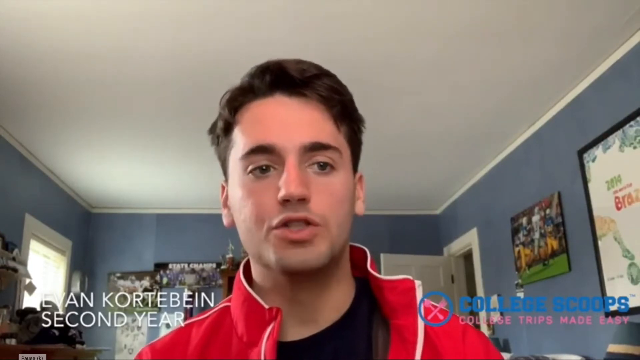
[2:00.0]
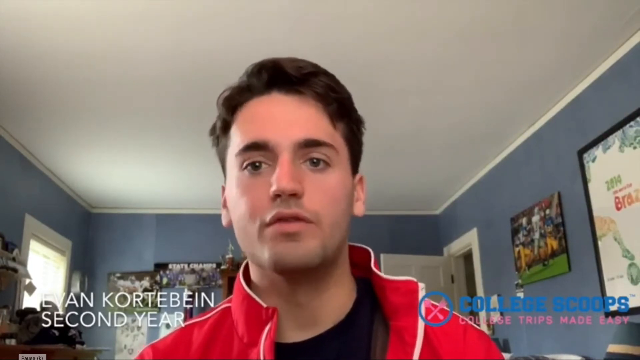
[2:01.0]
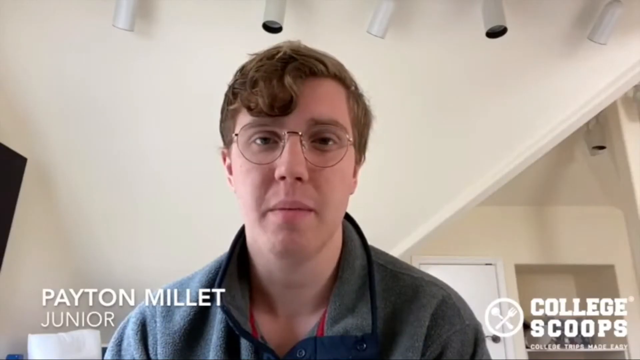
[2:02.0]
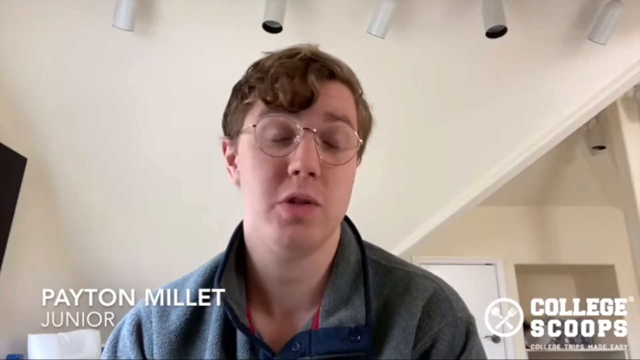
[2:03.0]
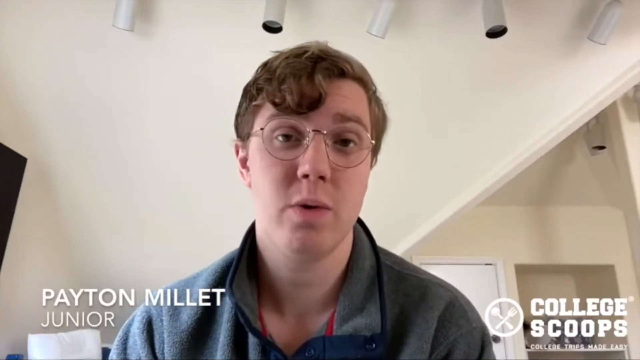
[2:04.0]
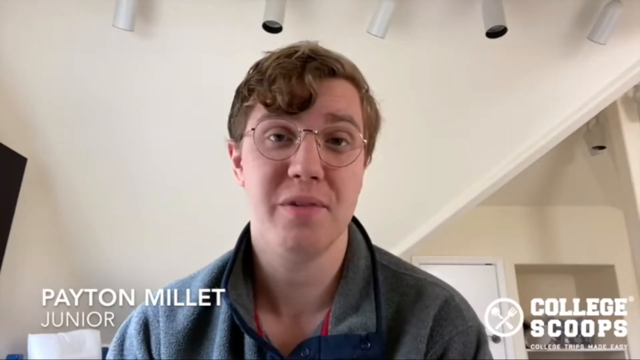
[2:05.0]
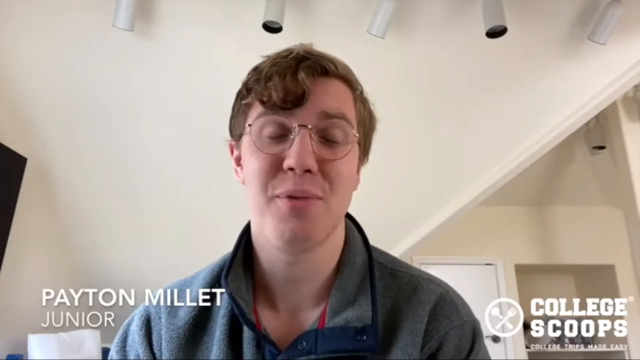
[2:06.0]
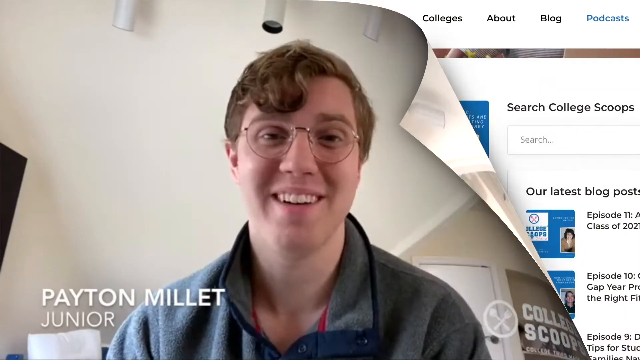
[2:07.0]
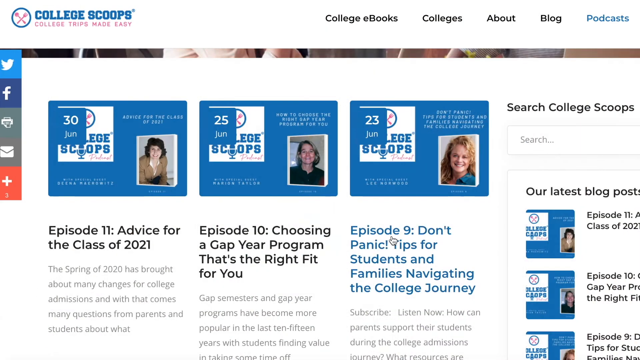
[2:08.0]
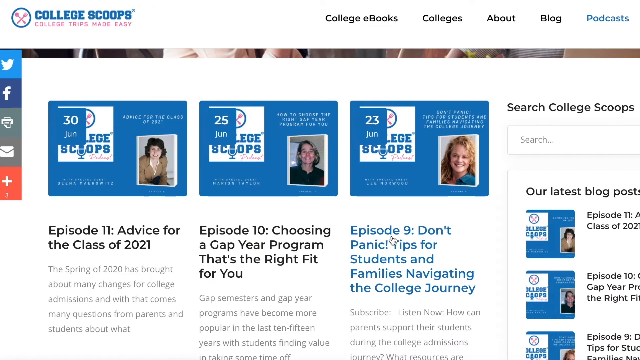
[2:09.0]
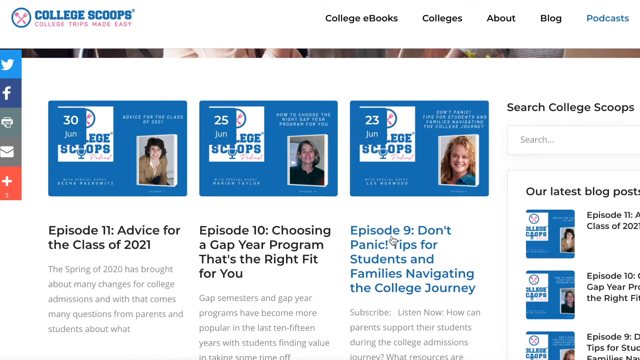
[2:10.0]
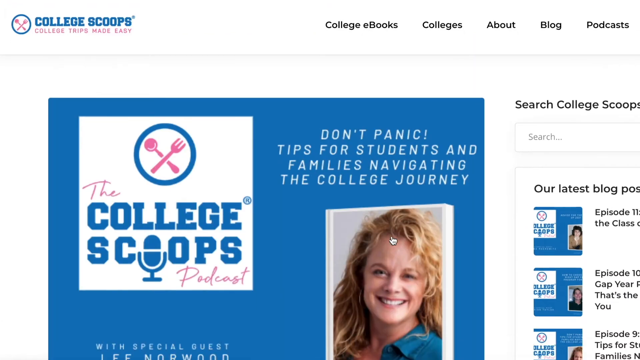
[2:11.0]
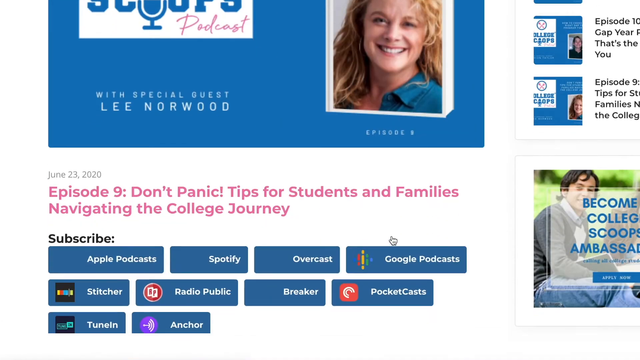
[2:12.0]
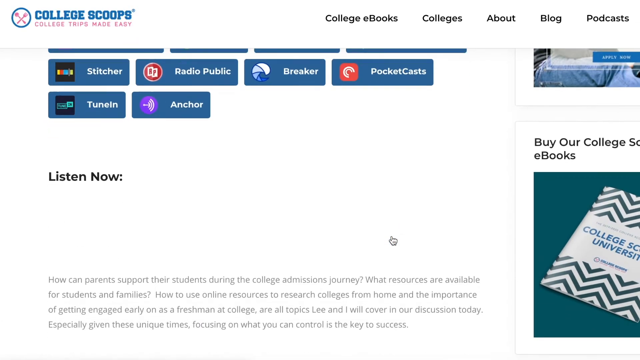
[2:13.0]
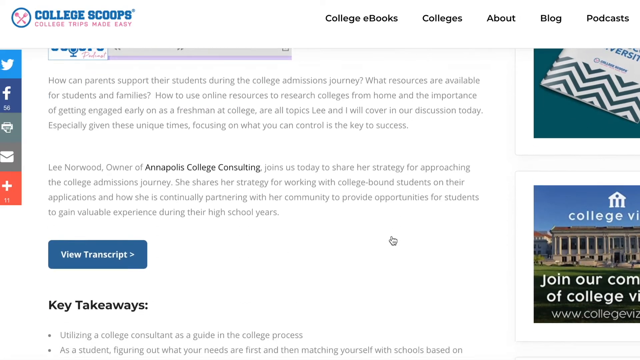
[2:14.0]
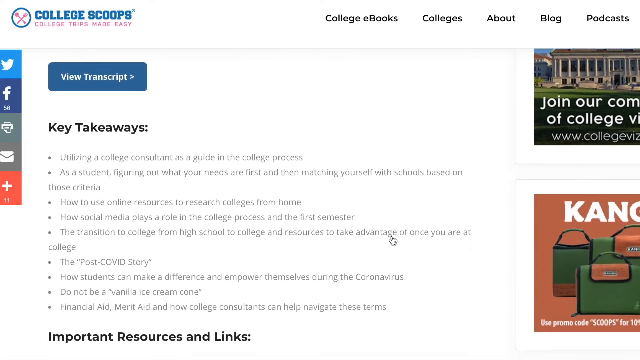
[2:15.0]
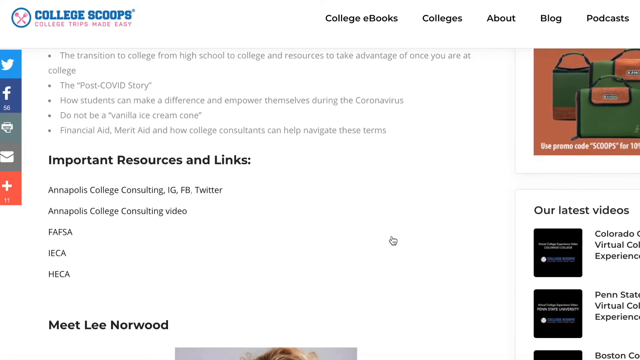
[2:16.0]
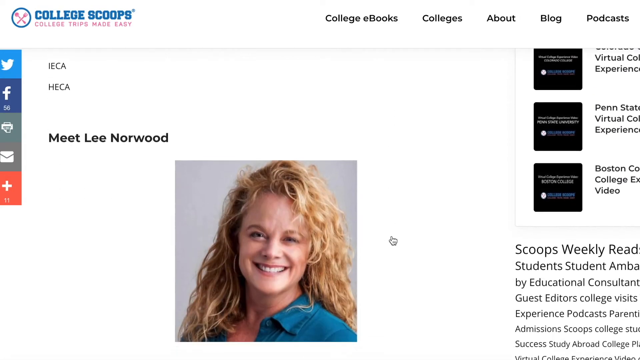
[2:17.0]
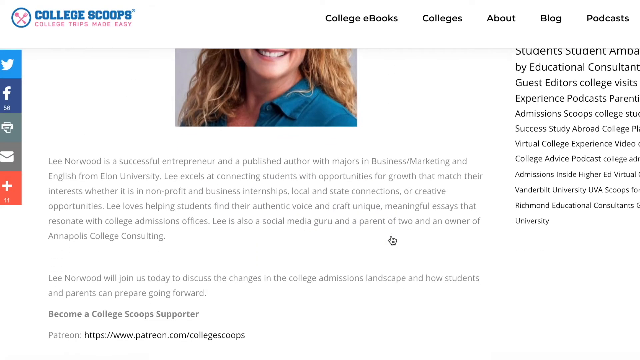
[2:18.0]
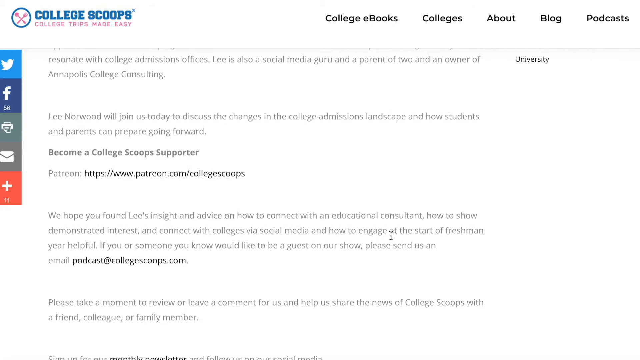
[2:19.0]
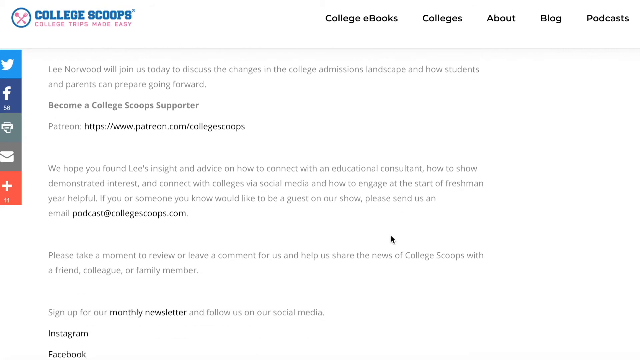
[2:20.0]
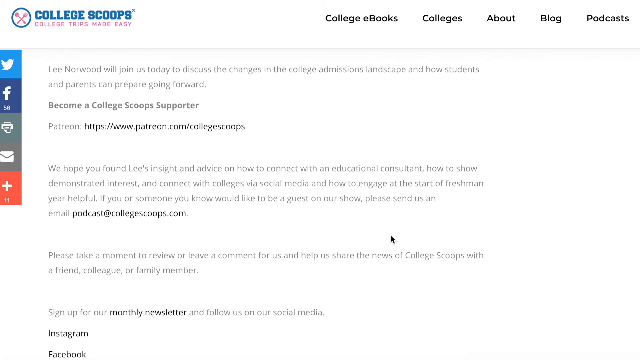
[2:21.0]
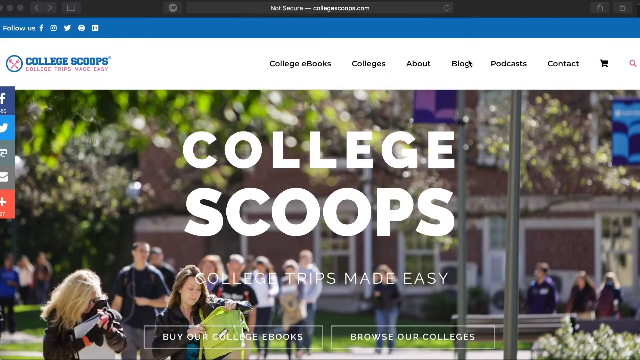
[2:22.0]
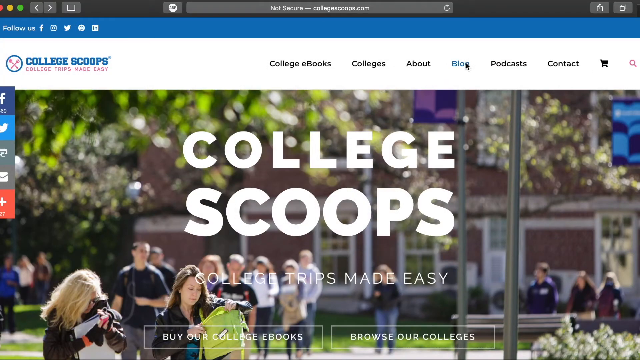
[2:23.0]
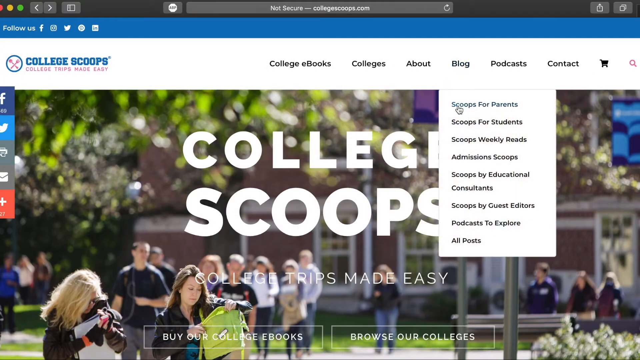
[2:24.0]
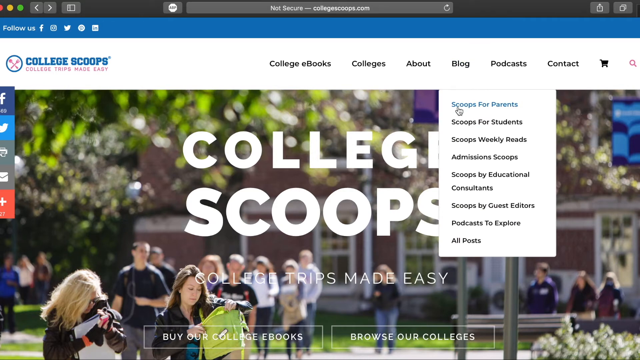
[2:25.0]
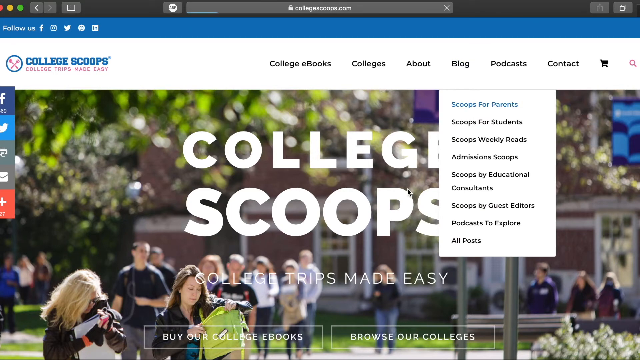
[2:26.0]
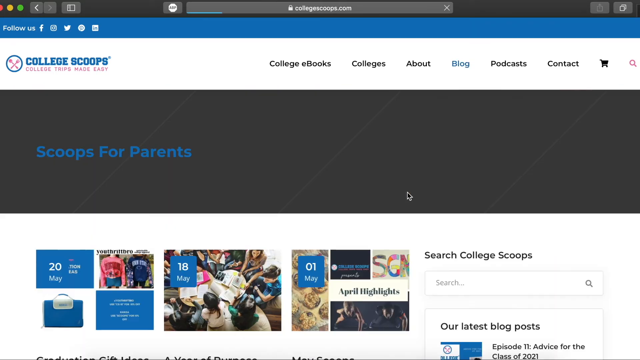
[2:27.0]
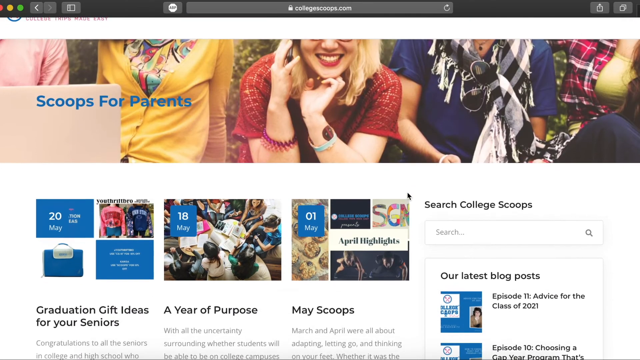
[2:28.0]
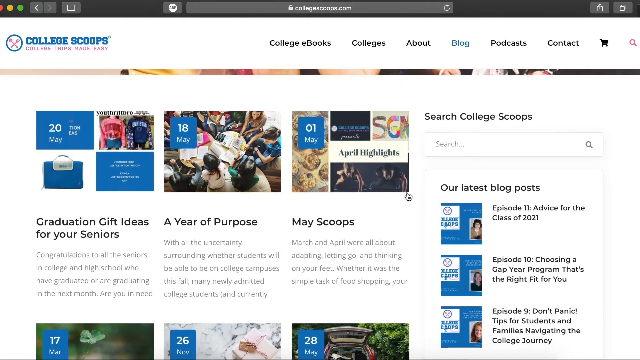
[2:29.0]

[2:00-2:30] The guy named Lyon continues talking; he wears a sort of red varsity jacket and looks very enthusiastic and happy with the service. Next is a guy named Peyton Millett, a junior, with really big, circular, thin rose gold glasses and a gray jacket, and interesting tube lights above him. The video cuts back to the College Scoops website, to what looks like a set of podcast episodes or articles: episode 9, episode 10 and episode 11, each named differently. Episode 9 is clicked, and it says "don't panic tips for students and families navigating the college journey." Scrolling down shows a lady named Lee Norwood with frizzy blonde hair. The view returns to the home screen, the blog tab is opened, "scoops for parents" is clicked, and the page is scrolled down a bit more.